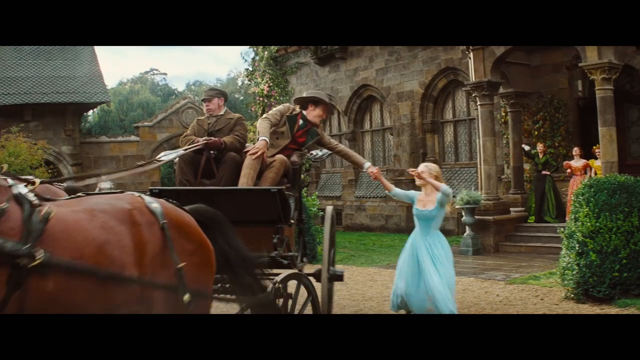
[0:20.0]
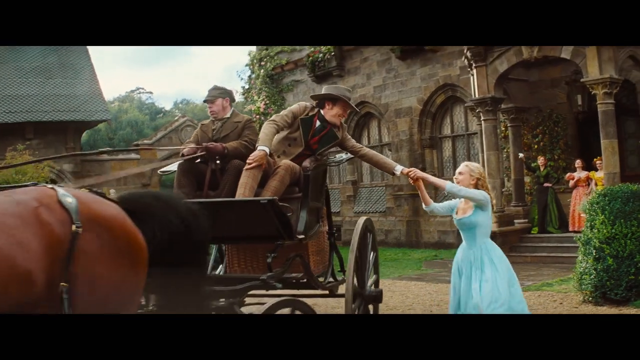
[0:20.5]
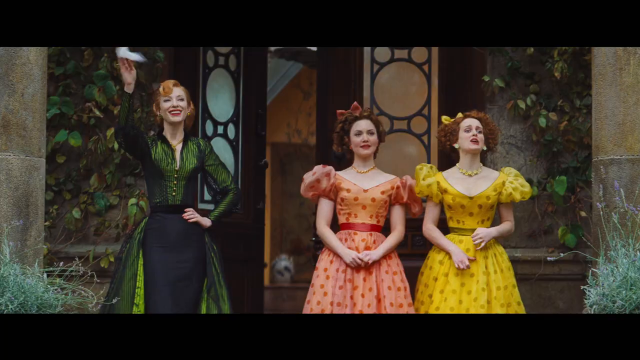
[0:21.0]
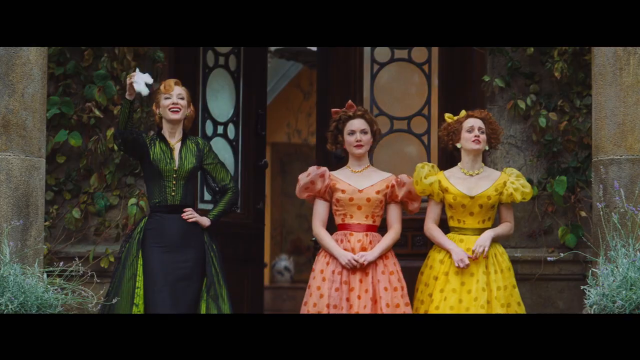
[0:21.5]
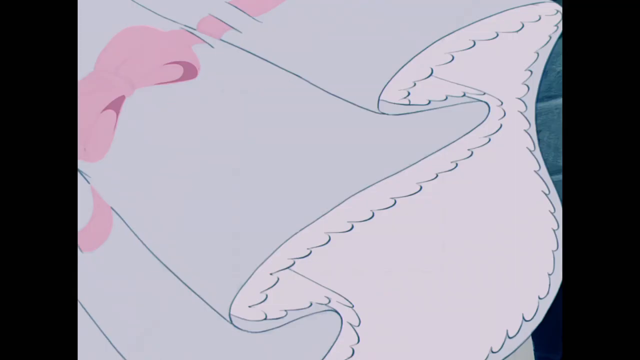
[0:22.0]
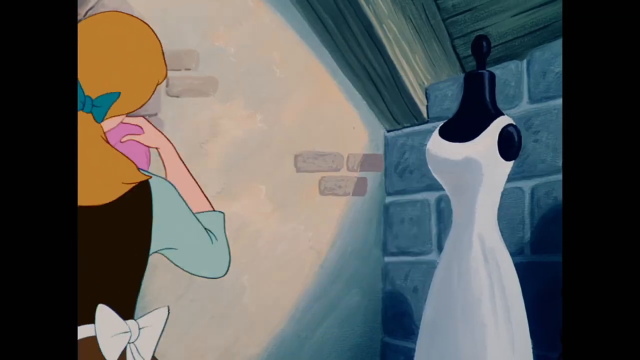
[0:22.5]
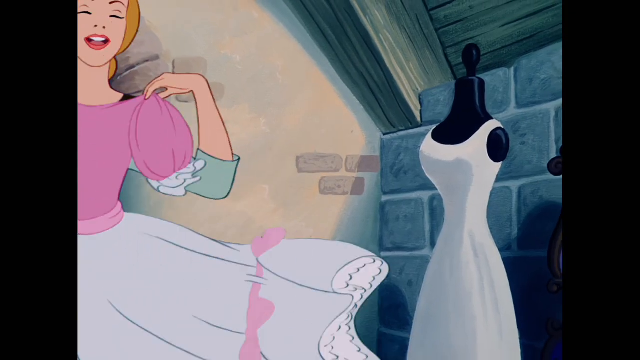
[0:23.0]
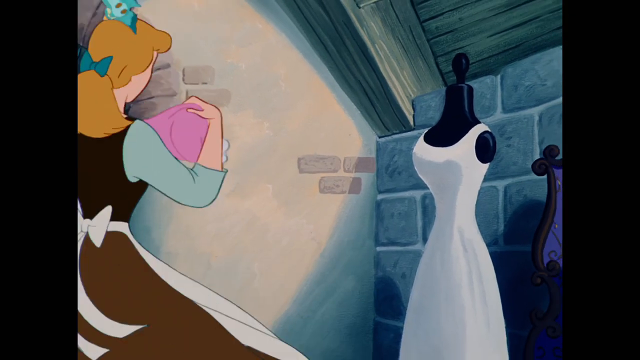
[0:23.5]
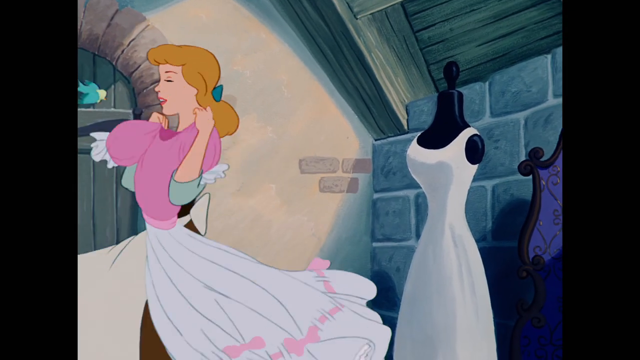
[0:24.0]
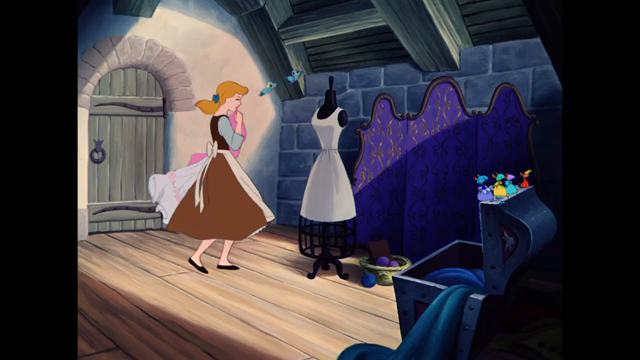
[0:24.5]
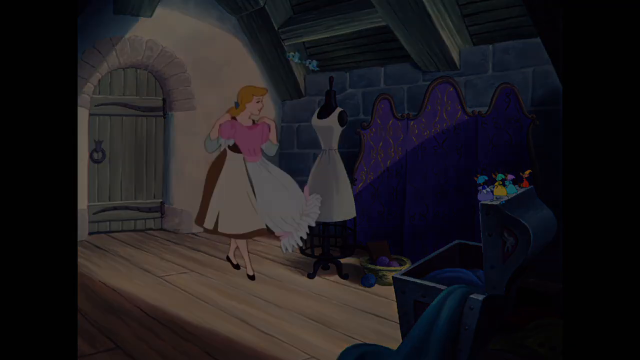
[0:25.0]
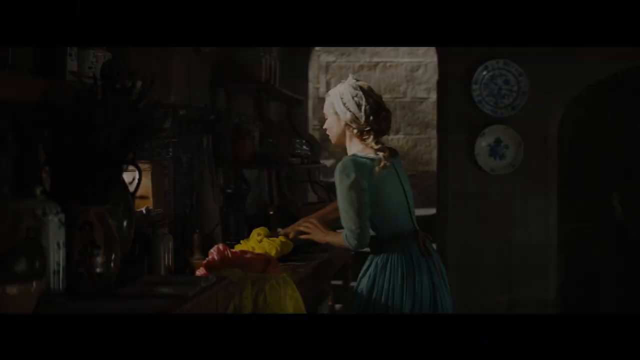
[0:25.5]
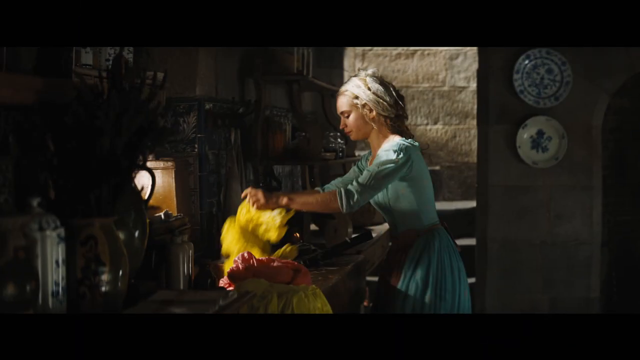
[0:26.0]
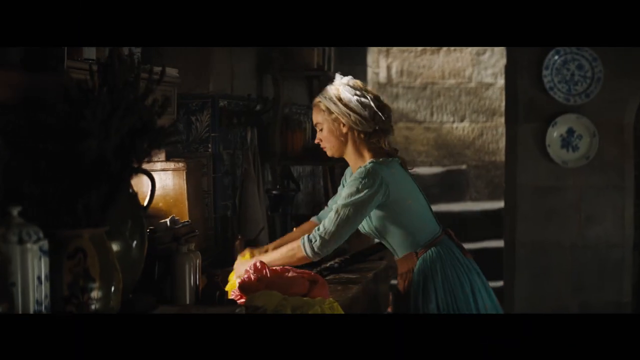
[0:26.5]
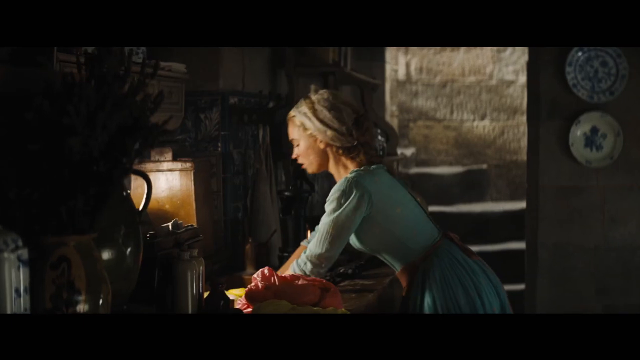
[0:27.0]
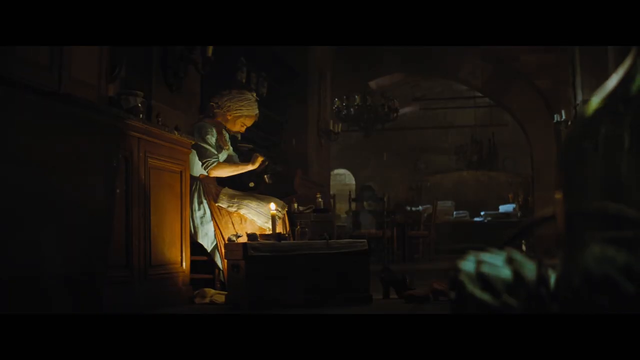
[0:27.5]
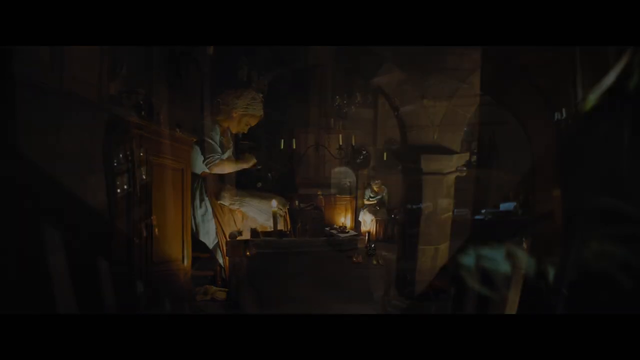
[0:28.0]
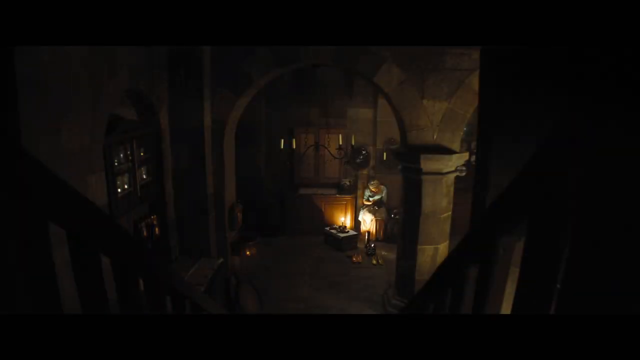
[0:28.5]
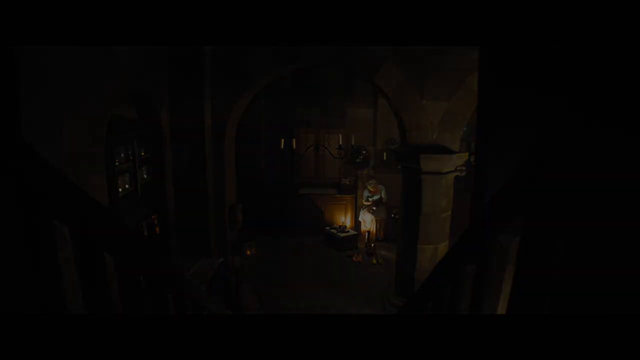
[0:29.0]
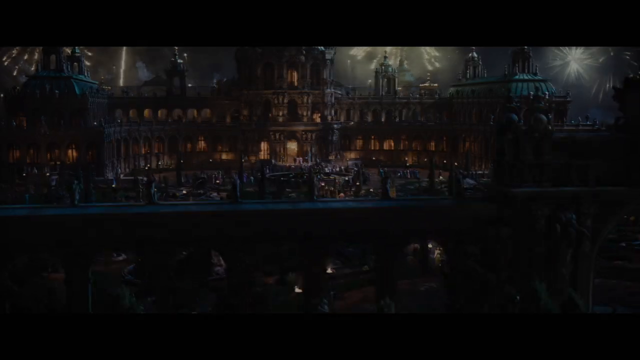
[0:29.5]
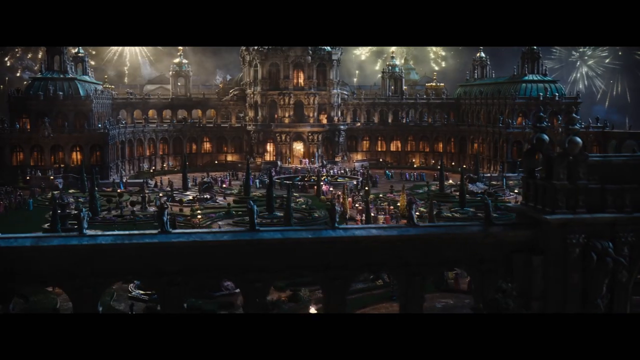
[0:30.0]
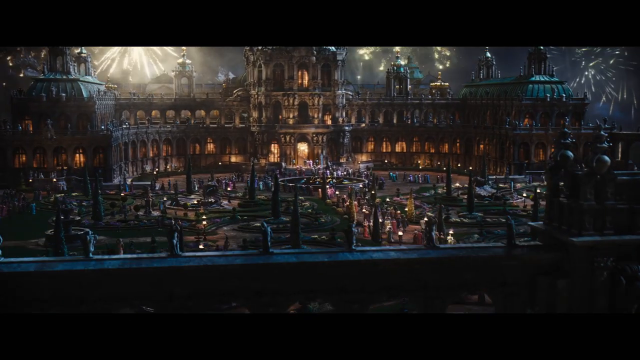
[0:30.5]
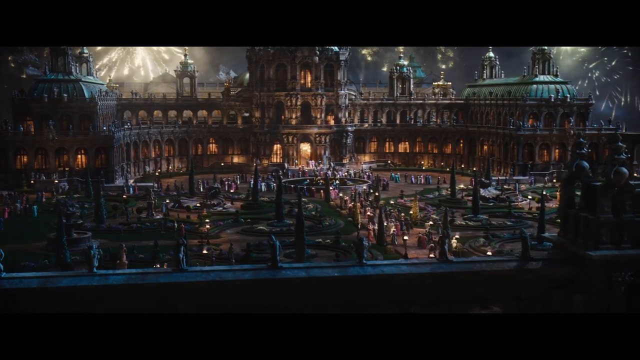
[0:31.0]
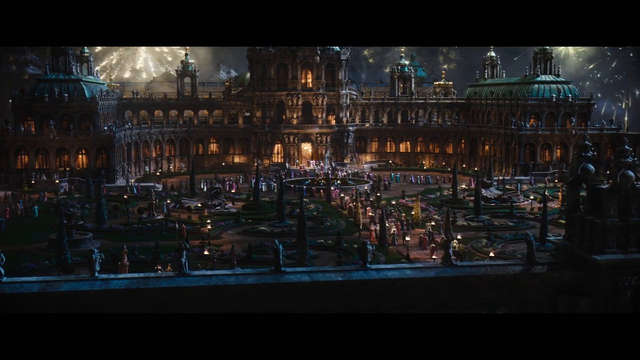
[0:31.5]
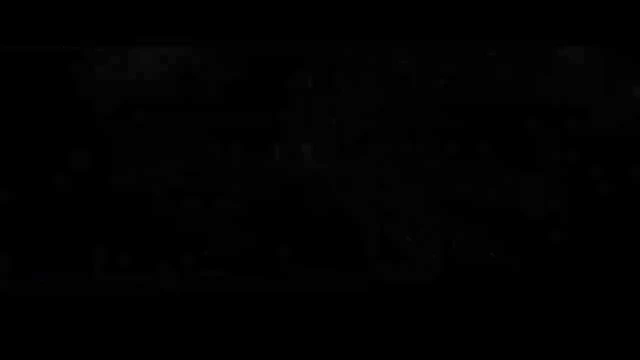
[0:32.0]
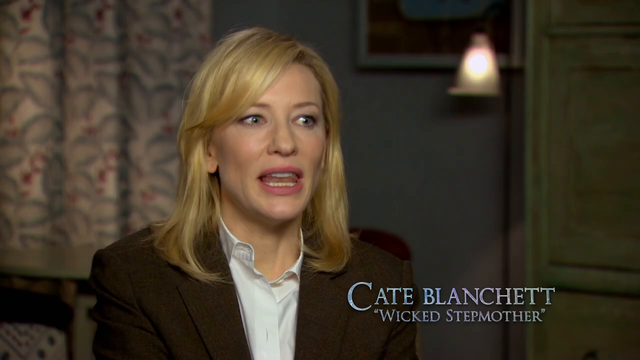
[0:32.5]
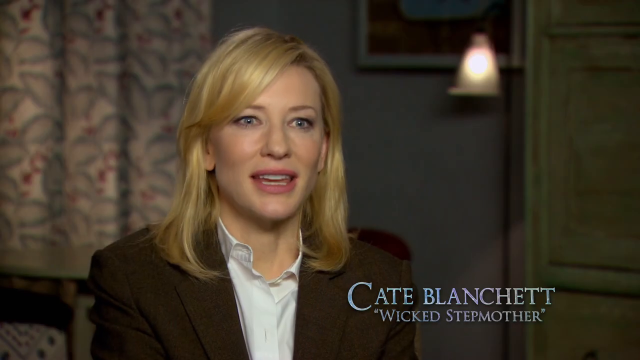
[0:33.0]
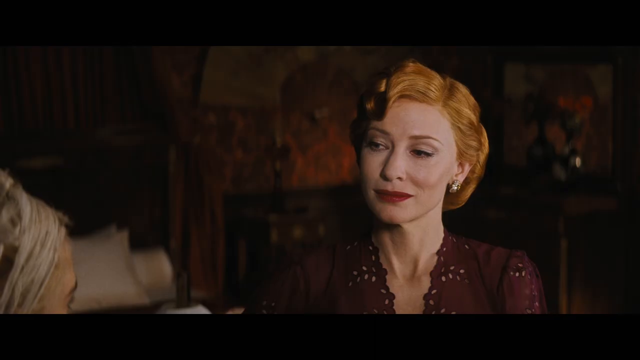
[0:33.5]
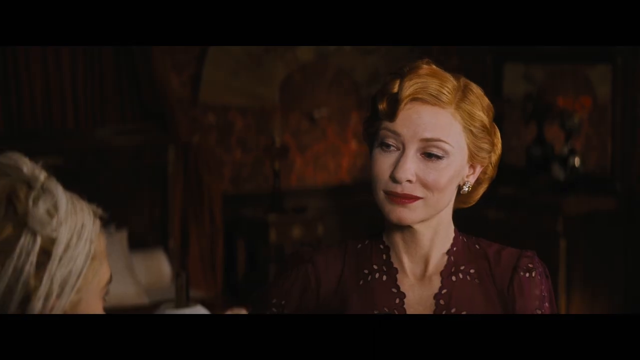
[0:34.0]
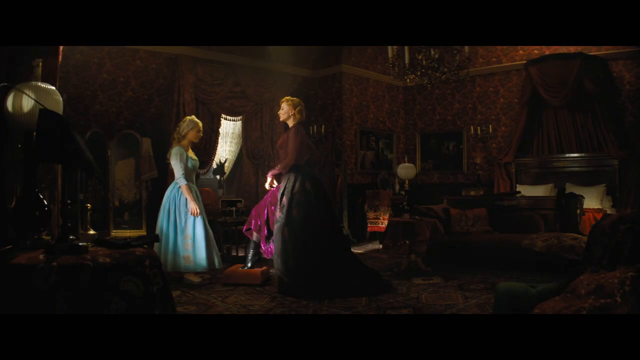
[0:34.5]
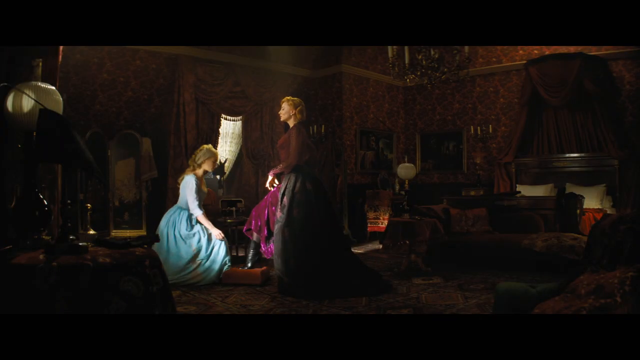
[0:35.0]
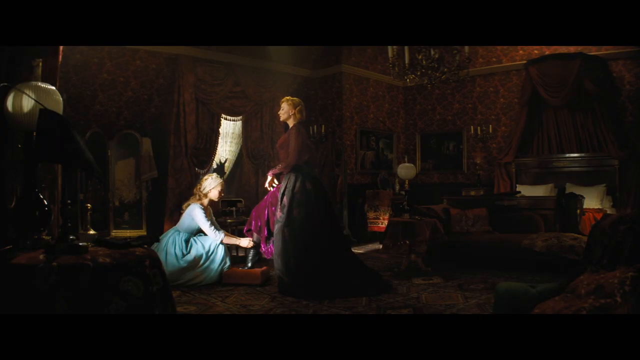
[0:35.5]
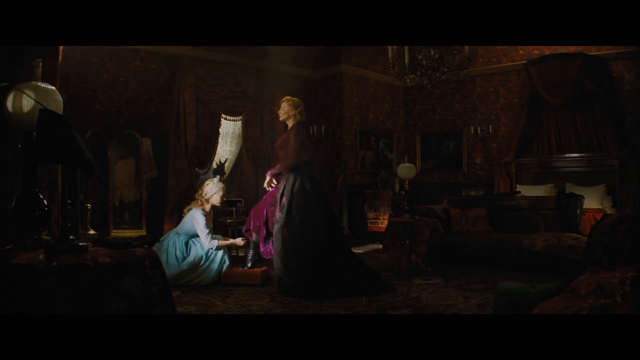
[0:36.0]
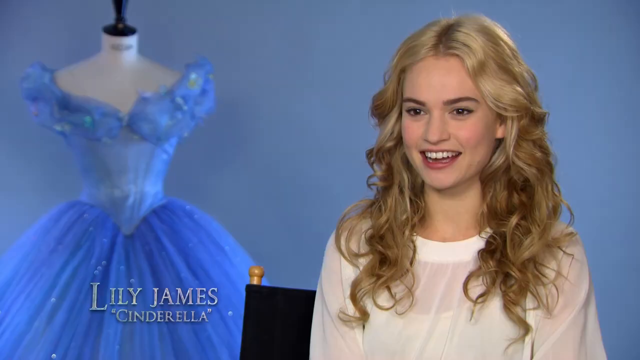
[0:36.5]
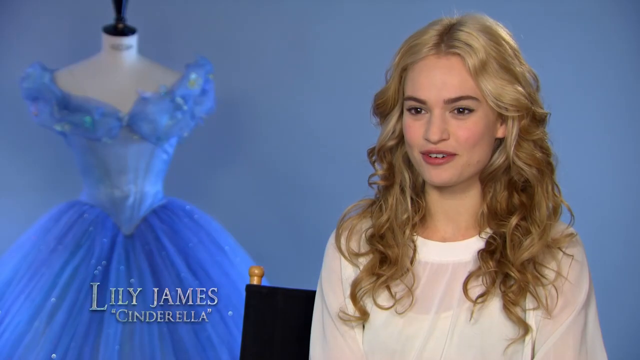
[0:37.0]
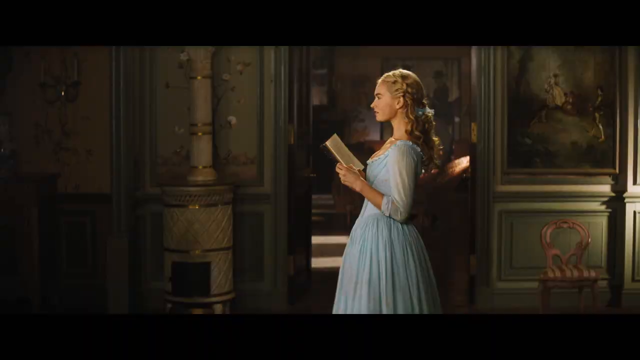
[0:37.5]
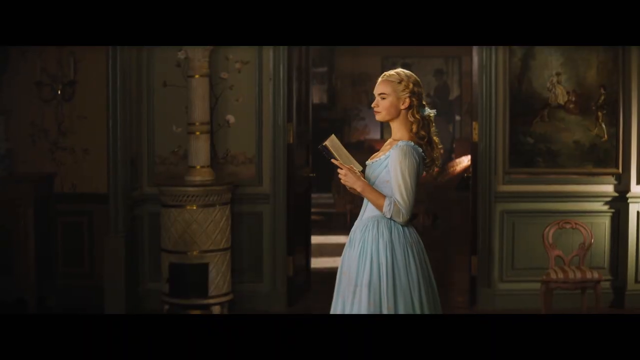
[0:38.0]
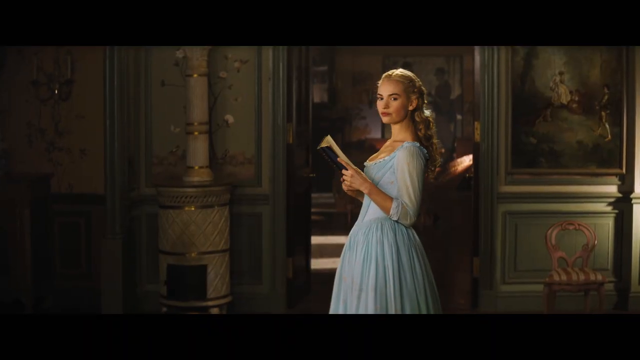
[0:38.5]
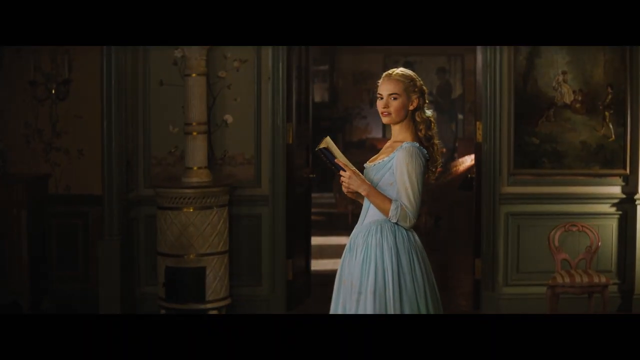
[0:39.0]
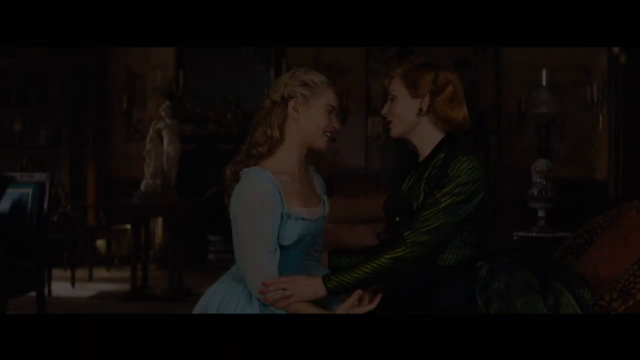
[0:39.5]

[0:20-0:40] Two men ride on a chariot while a lady in a blue gown talks to them, wanting to go with them. Three other ladies stand by the doorway: one in a yellow gown, another in peach, and the third, their mother, in a black and green gown. An animated part is shown. A girl wears a beautiful gown in a fitting room and dances in it. Cinderella does all the house chores. Kate Blanchett, who played the wicked stepmother, is shown, as is Lily James, who played Cinderella.